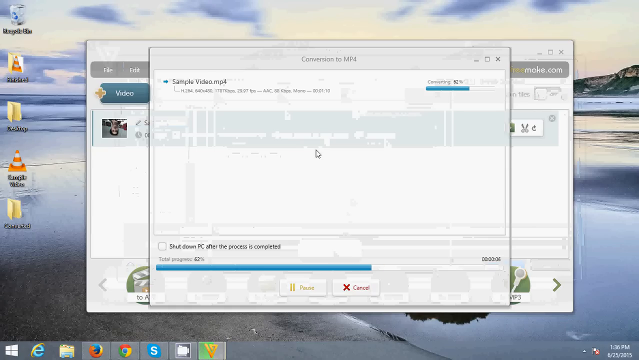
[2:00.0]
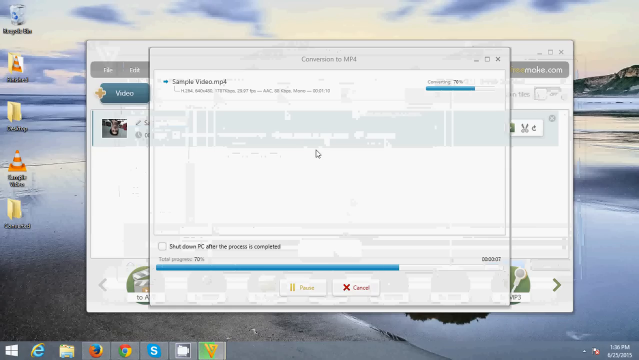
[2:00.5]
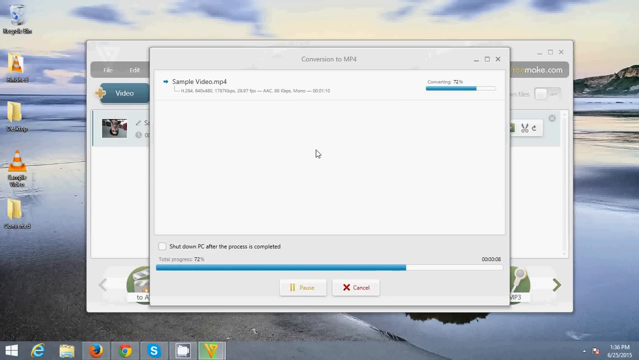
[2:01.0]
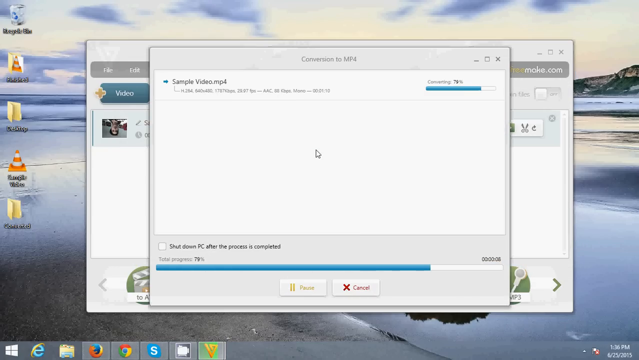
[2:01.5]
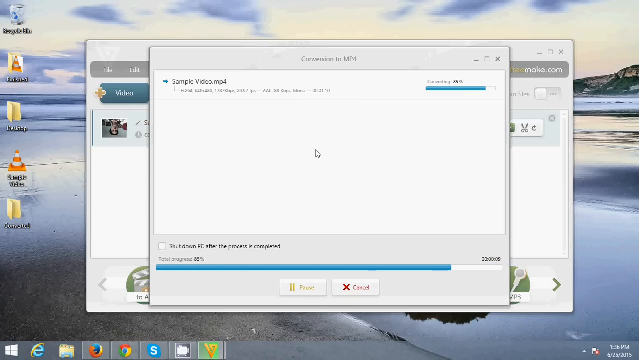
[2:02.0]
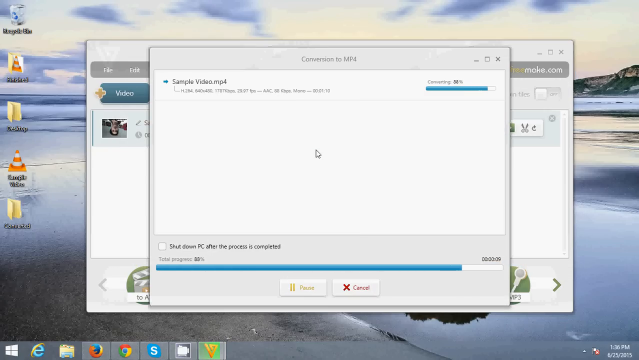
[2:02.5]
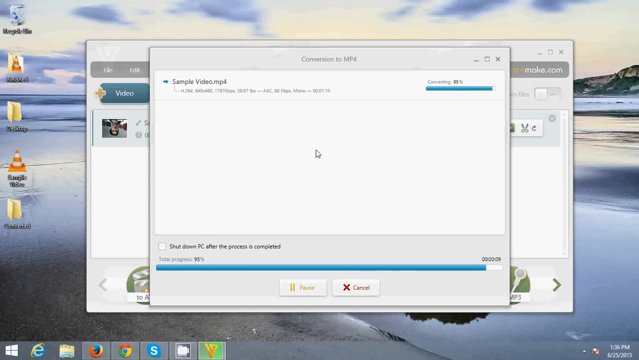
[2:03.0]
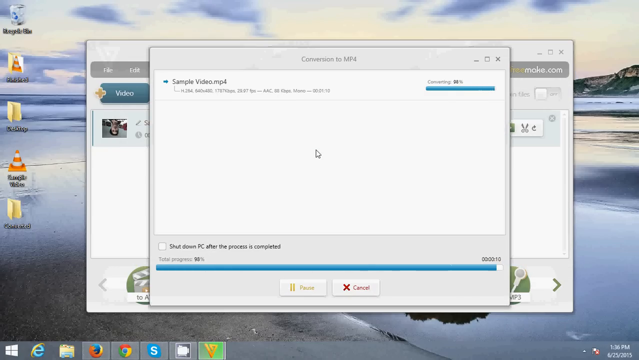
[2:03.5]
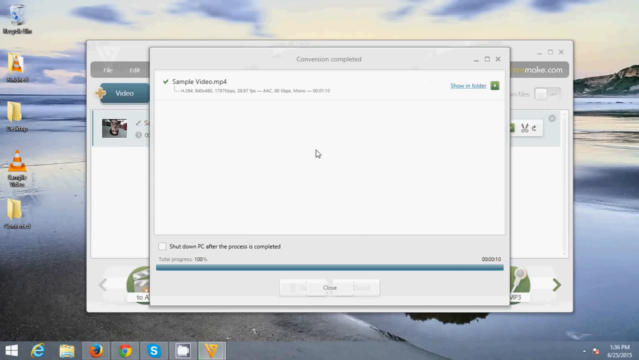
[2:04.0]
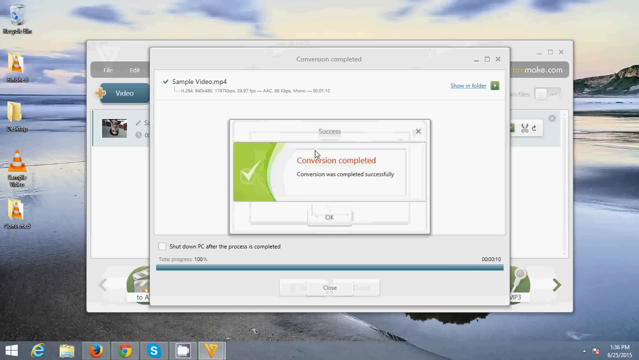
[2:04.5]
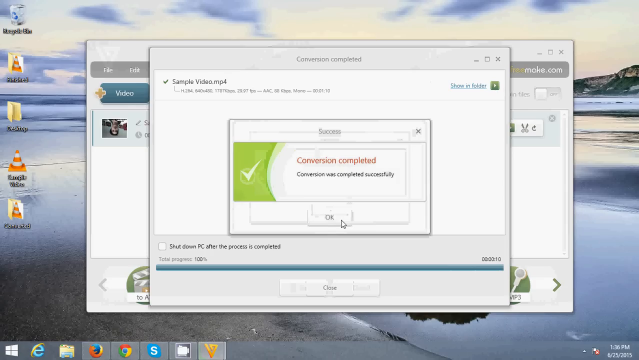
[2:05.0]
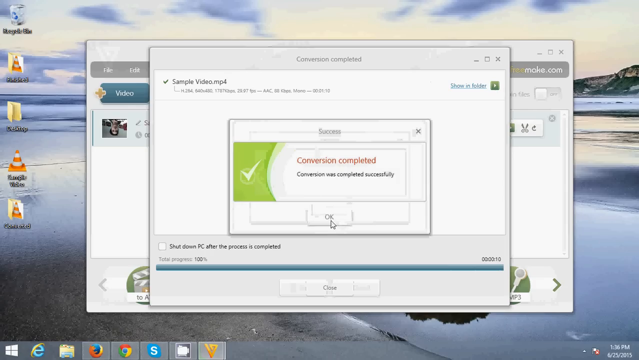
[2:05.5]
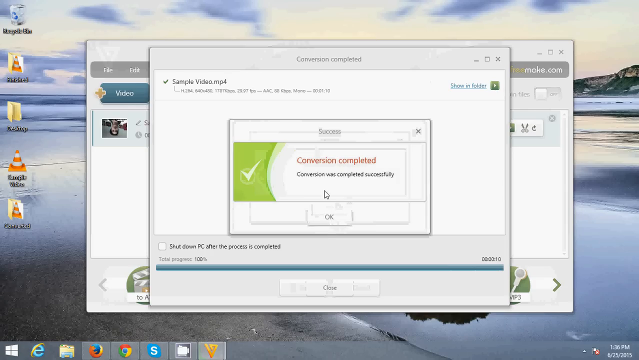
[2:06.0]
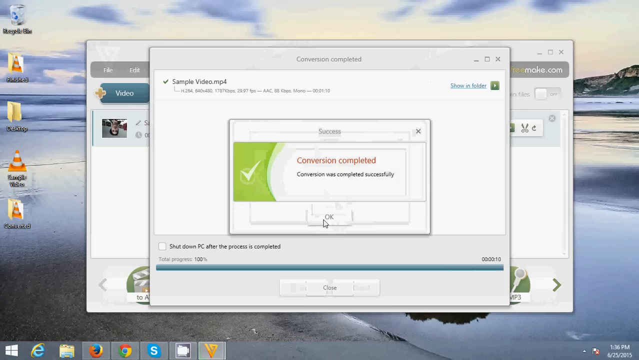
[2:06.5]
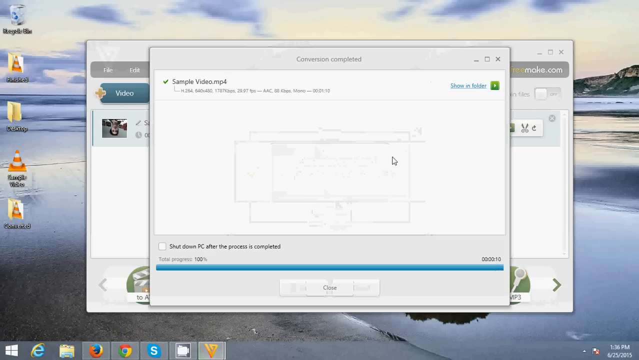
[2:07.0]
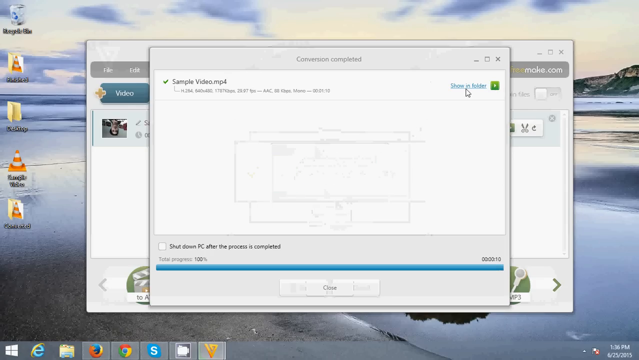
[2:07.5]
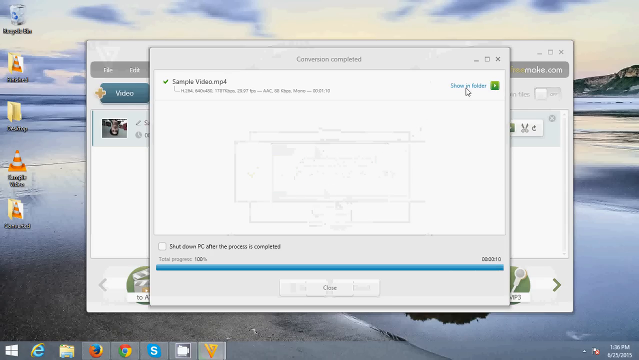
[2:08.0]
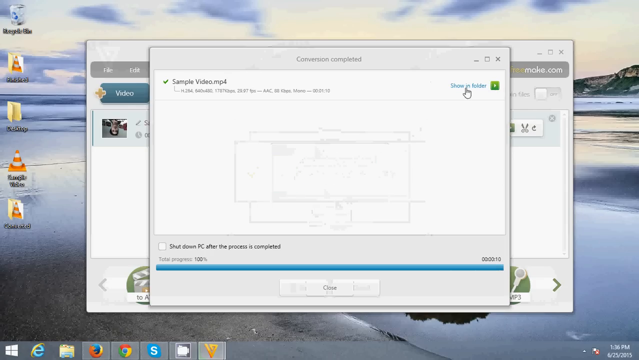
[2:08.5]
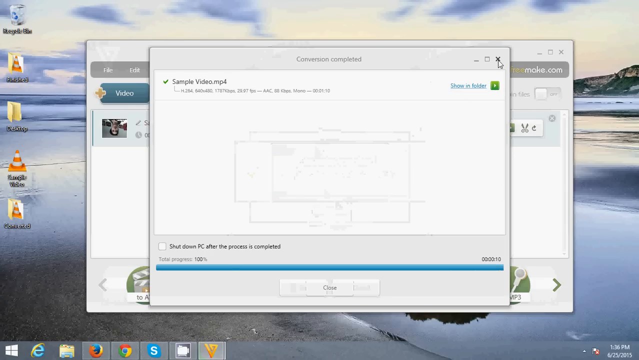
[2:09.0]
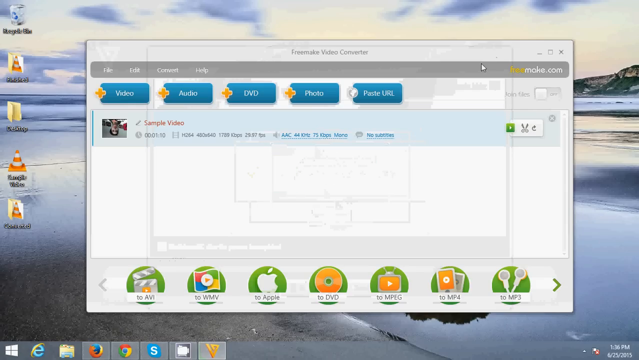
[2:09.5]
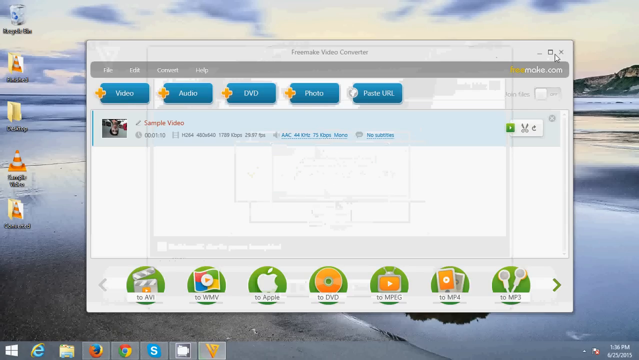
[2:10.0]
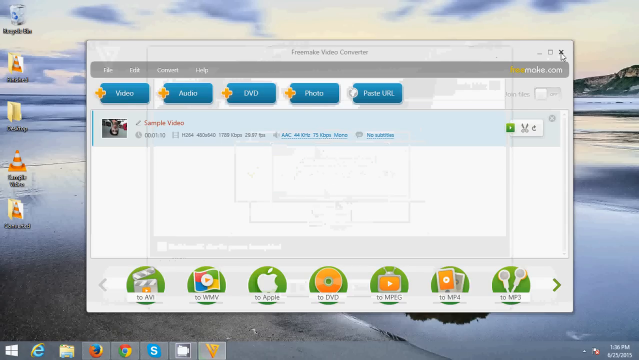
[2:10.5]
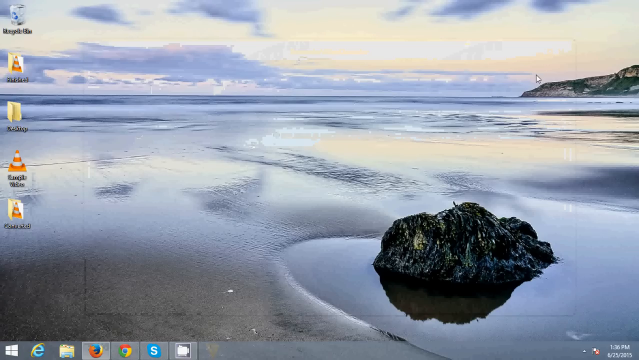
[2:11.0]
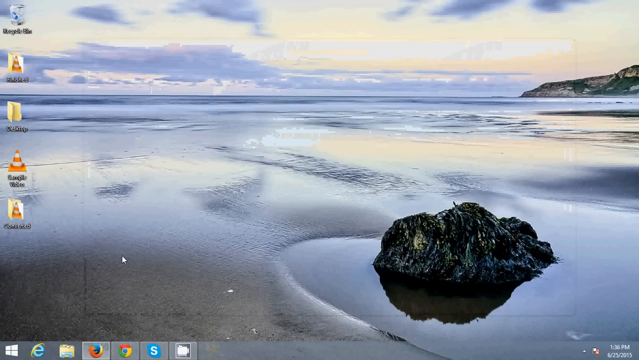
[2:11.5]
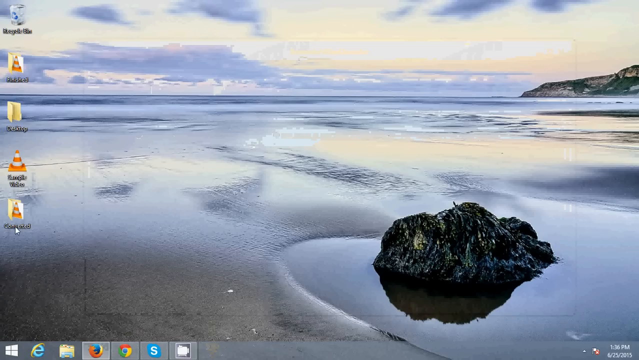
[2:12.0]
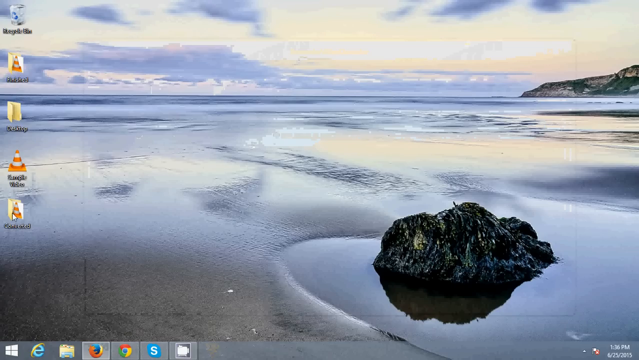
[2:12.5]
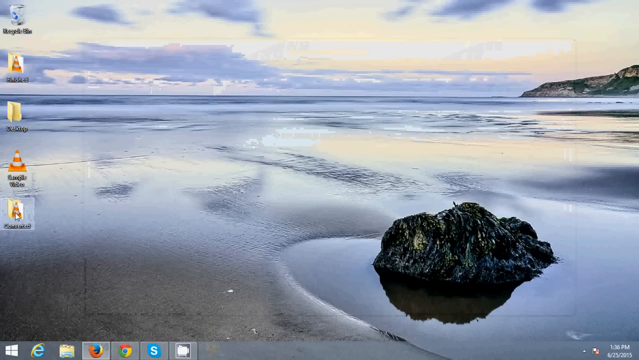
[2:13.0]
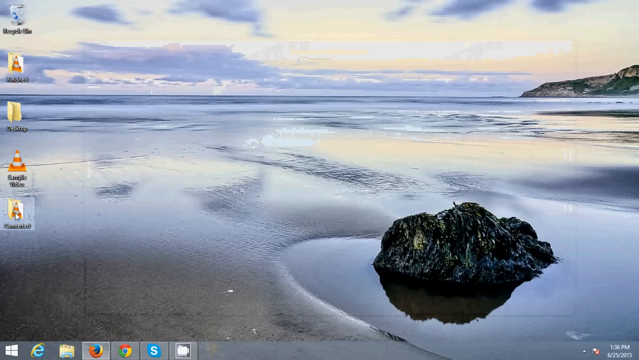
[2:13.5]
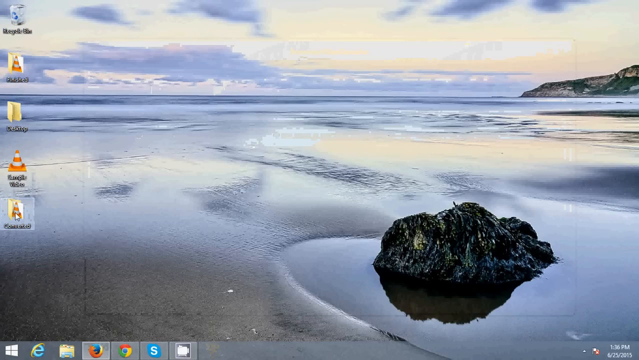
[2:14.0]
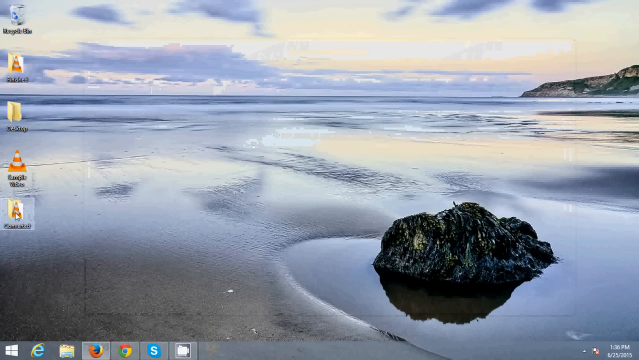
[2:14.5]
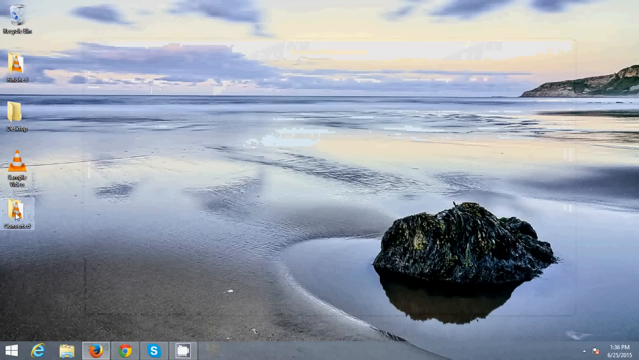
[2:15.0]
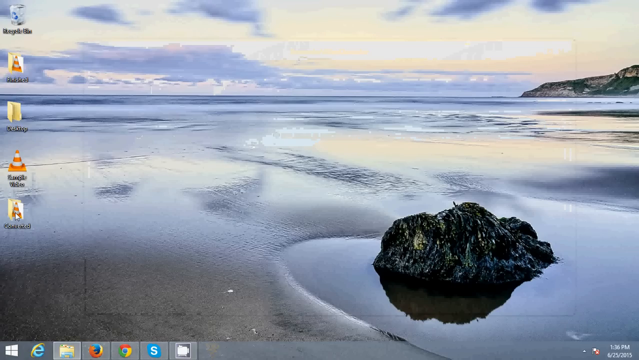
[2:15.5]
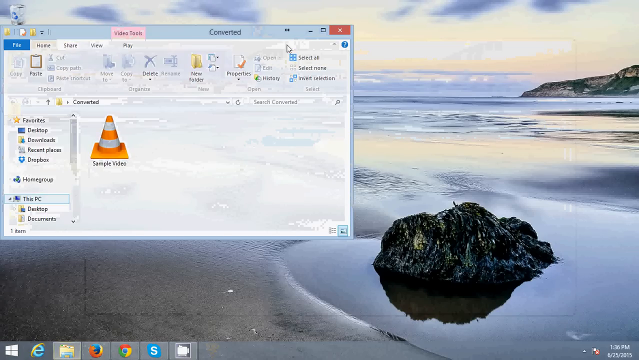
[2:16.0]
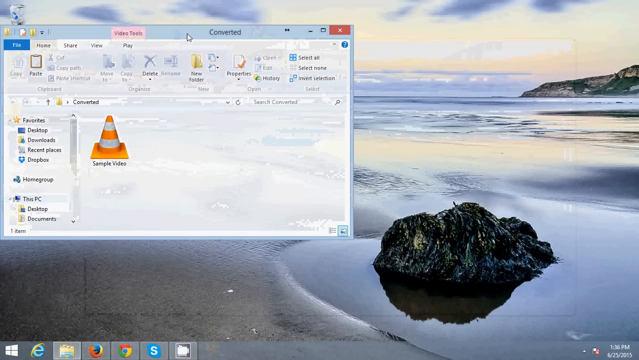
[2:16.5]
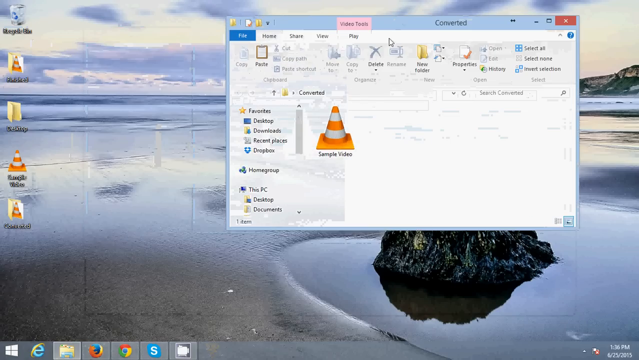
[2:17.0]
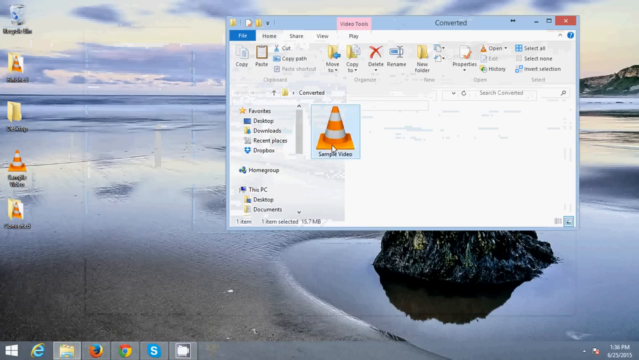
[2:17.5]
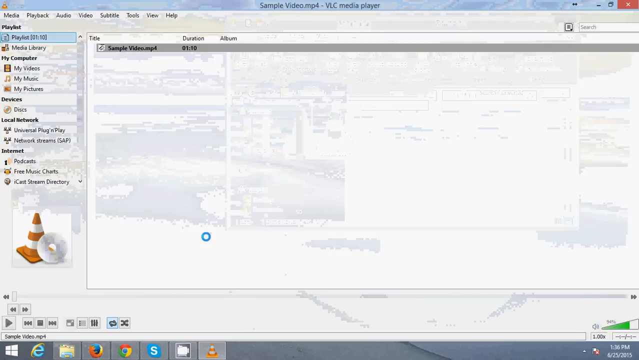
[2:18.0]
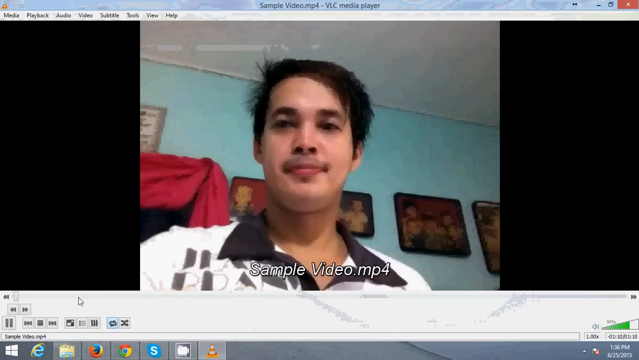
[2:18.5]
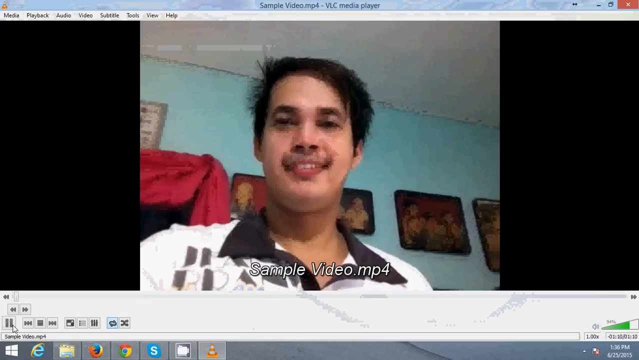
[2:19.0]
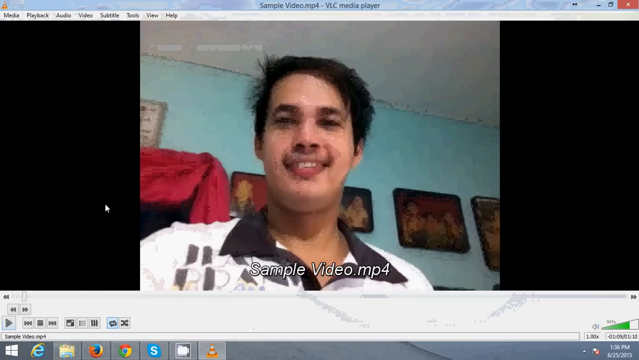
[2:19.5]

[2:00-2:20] The blue progress bar at the bottom of the box moves along and finishes. Another, smaller box then pops up in front of the others, saying "conversion completed" and that the conversion was completed successfully, with a green box containing a white tick on its left-hand side and an OK button underneath. OK is clicked, closing that box and returning to the conversion completed box, which has "show in folder" in blue writing in the top right-hand corner; it is not clicked. A small black arrow in the top right-hand corner of that box is clicked, closing it, and the program window is then also closed. Back on the desktop, the new folder created earlier is visible: a yellow folder with an orange traffic cone in it. The mouse goes to it and opens it, and the folder window is moved to the center of the screen. Inside is the sample video with an orange traffic cone icon, which is clicked and opened, showing the video in the horizontal saved format.